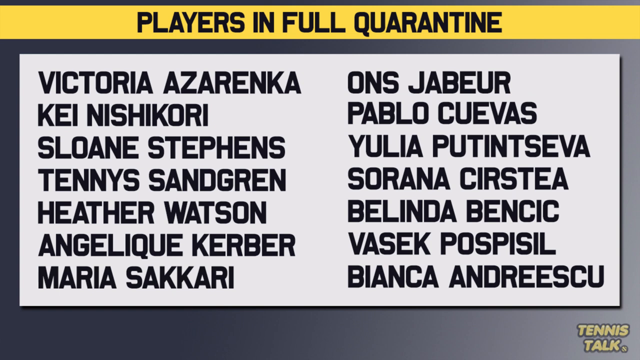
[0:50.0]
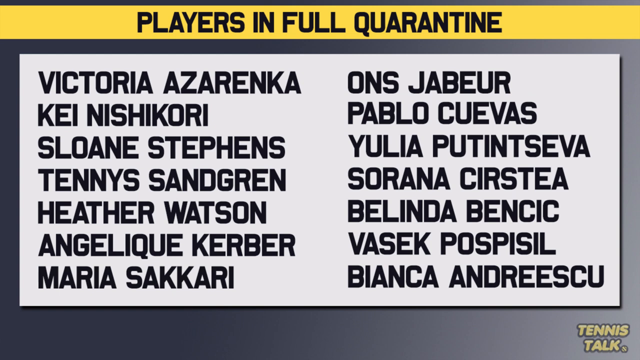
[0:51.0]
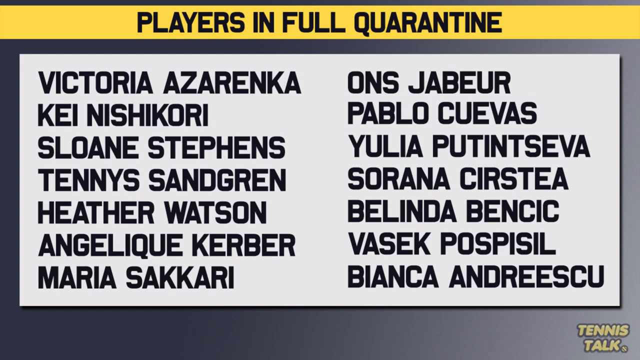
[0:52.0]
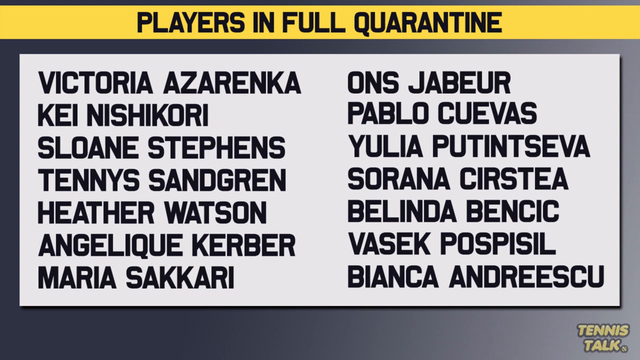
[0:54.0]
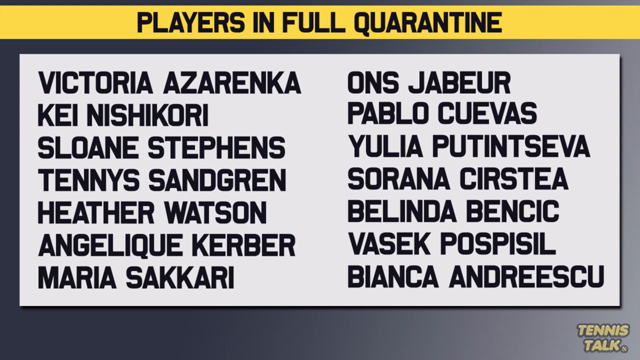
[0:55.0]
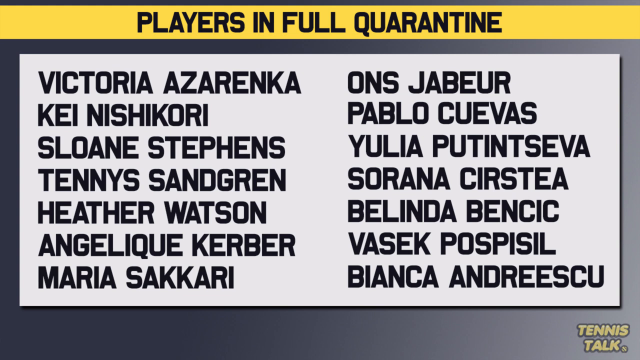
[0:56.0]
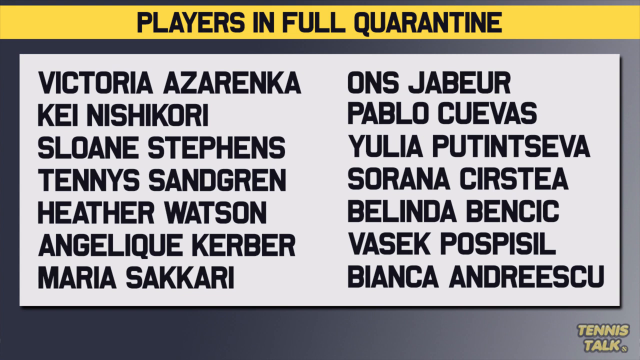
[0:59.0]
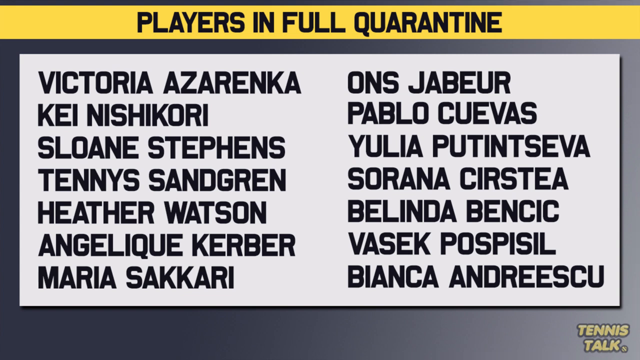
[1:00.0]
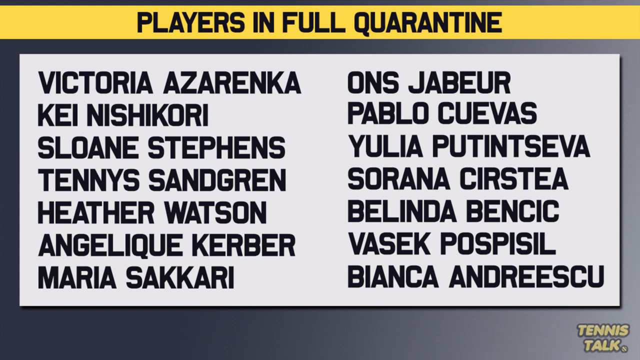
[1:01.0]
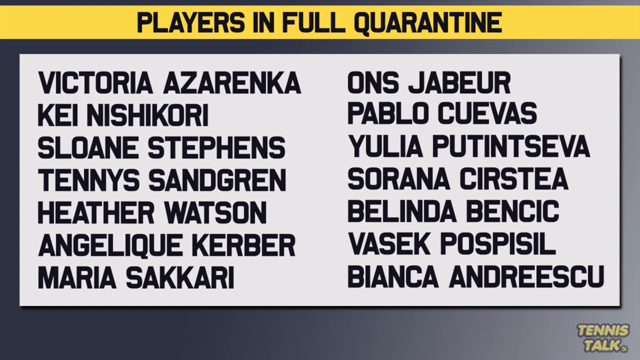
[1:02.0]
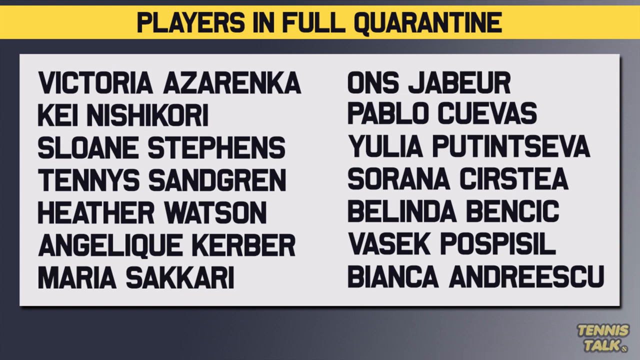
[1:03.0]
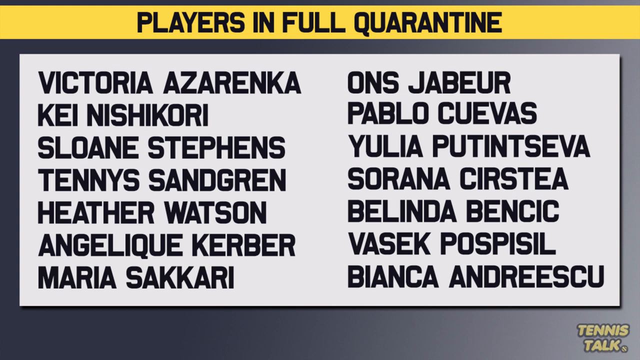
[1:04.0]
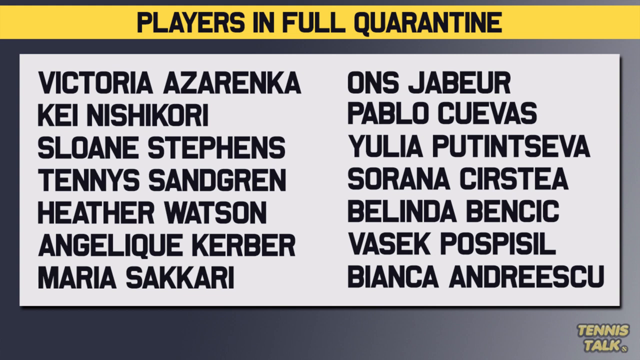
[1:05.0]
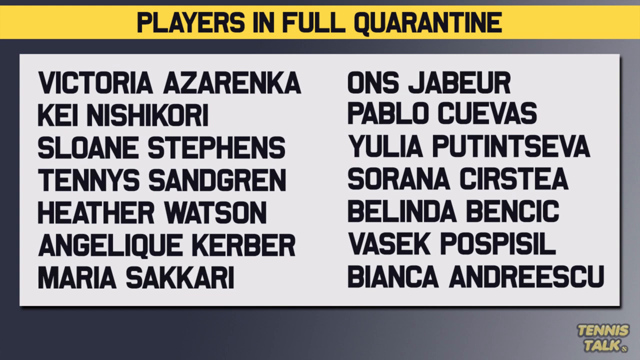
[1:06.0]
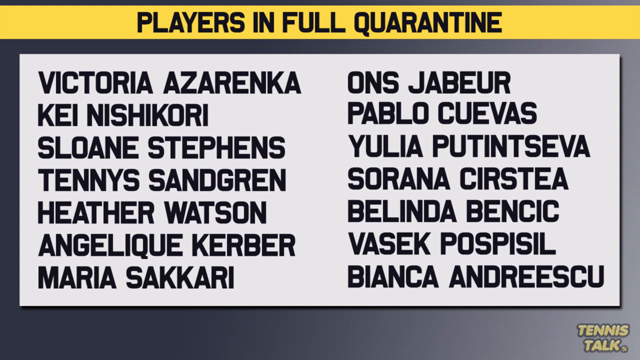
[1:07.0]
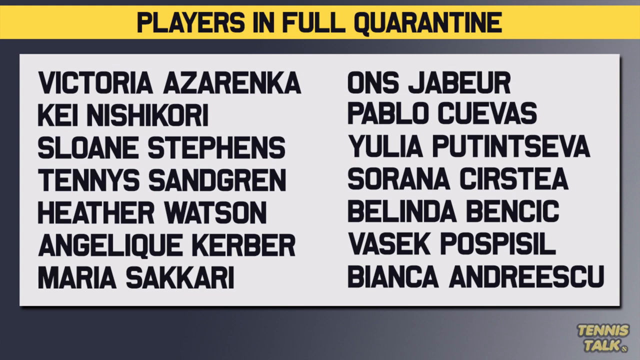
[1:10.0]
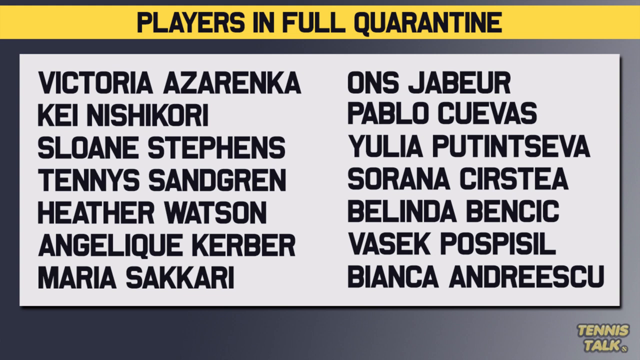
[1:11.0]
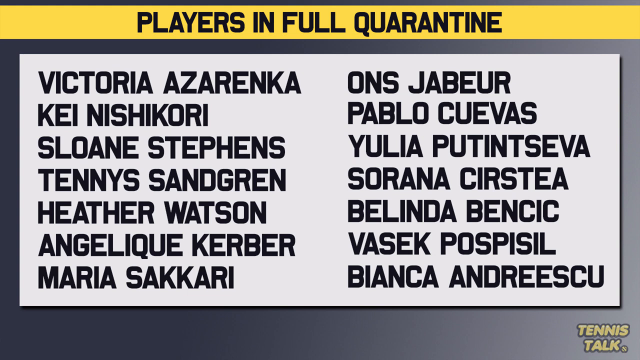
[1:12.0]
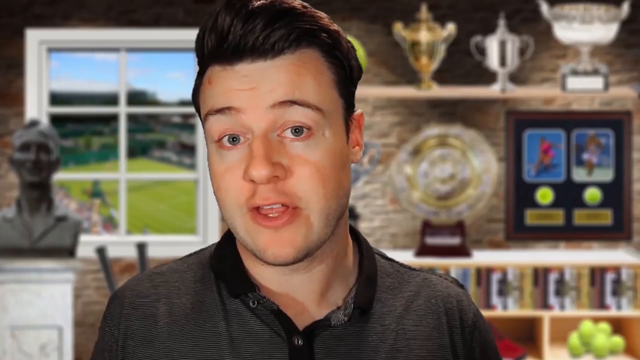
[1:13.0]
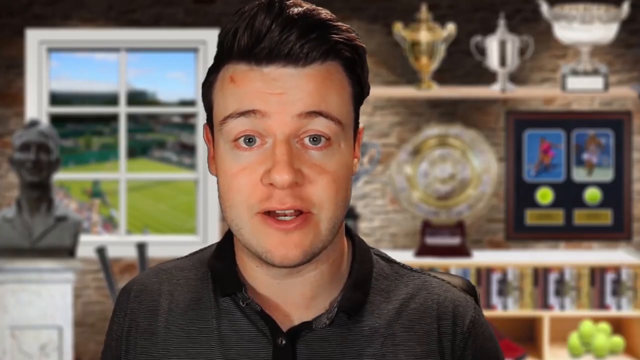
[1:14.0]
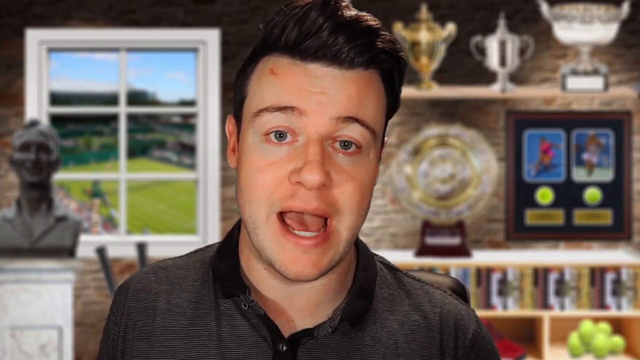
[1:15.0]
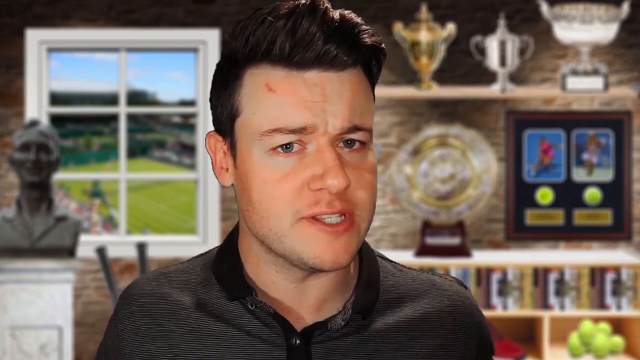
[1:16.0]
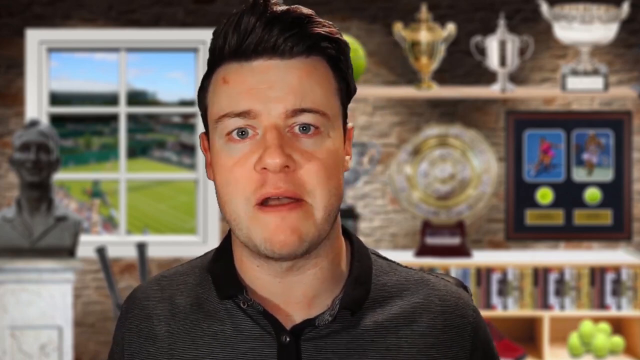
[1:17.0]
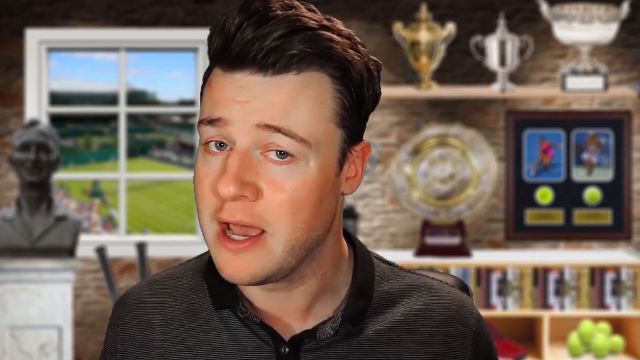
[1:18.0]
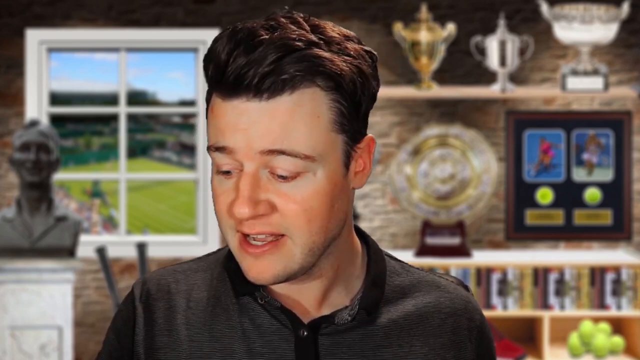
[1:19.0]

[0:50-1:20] At the top of the screen is an orange bar with a line of black text that says "Players in Full Quarantine". Directly beneath it, on what looks like a sheet of paper with a white background, are two columns of seven lines each, all black names. The left column lists Victoria Azarenka, Kei Nishikori, Sloane Stephens, Tennys Sandgren, Heather Watson, Angelique Kerber and Maria Sakkari. The right column lists Ons Jabeur, Pablo Cuevas, Yulia Putintseva, Sorana Cirstea, Belinda Bencic, Vasek Pospisil and Bianca Andreescu. This stays on the screen for quite a while before the image changes to a man in a stone-walled room, facing the camera as he speaks. Behind him, on his left, is a white-framed window with what looks like an artificial image of a meadow and mountains, and in front of it, a little to the side, is a bust of somebody. On the right are two shelves of trophies, with what look like sports memorabilia lined up underneath them. The man is white and wears dark clothing. He speaks very animatedly, moving his head around a lot, opening his mouth wide and shrugging his shoulder. He looks directly at the screen most of the time, except once, right before the shot ends, when he looks down and to the right for a few seconds.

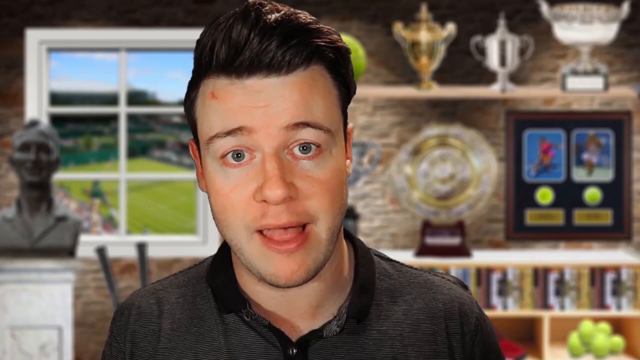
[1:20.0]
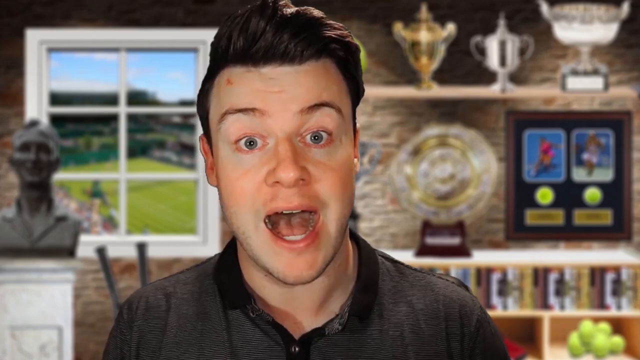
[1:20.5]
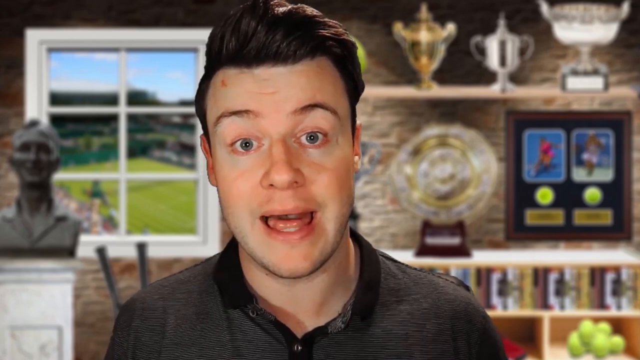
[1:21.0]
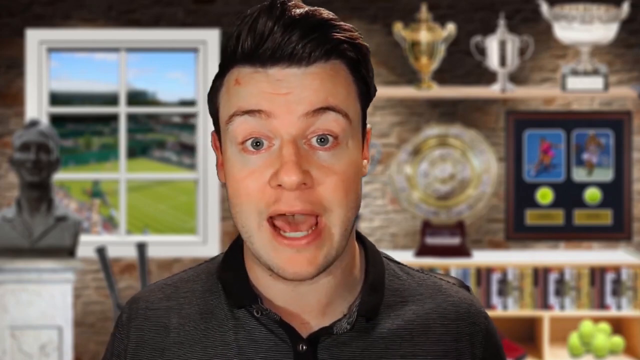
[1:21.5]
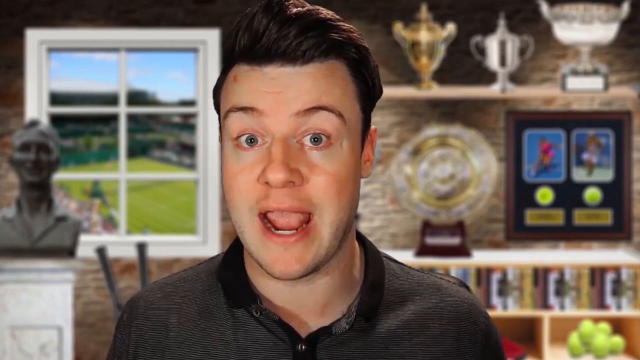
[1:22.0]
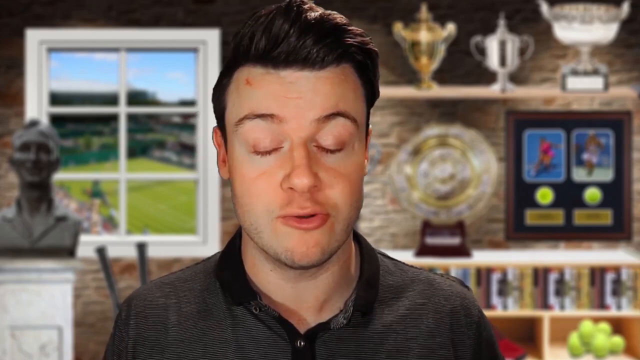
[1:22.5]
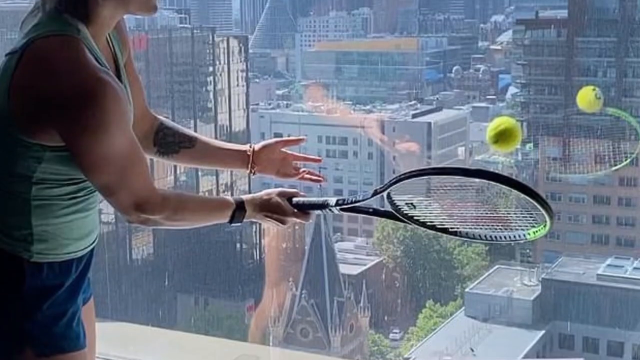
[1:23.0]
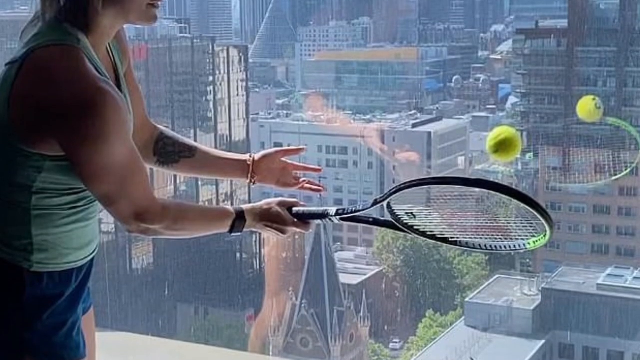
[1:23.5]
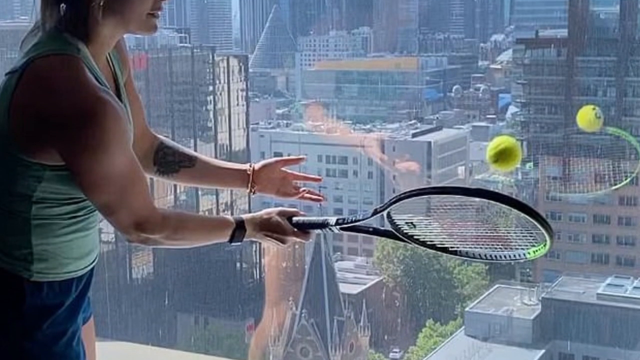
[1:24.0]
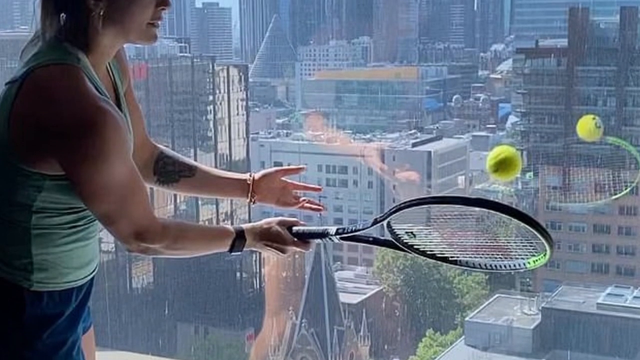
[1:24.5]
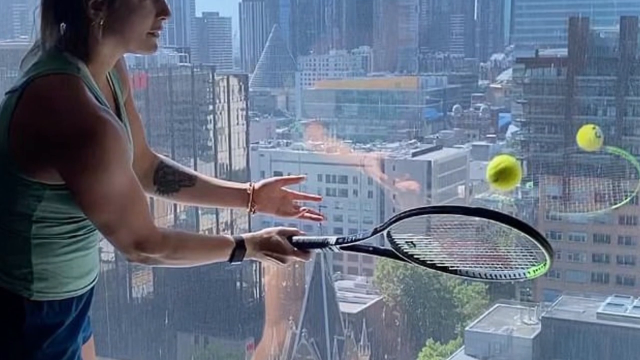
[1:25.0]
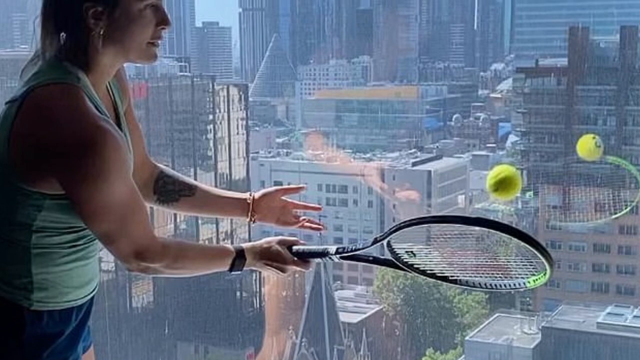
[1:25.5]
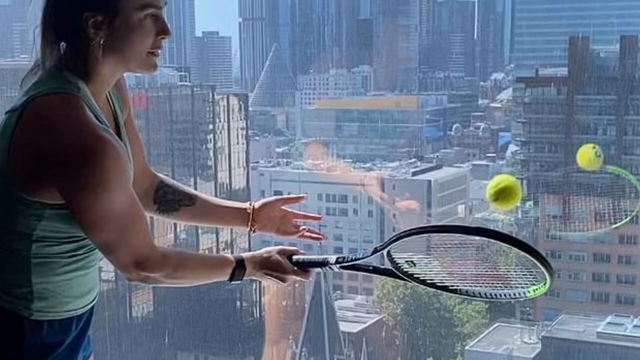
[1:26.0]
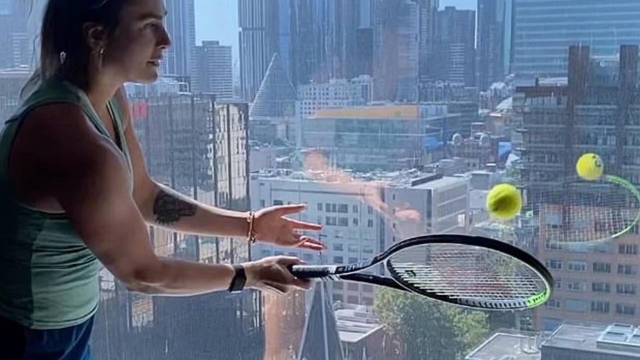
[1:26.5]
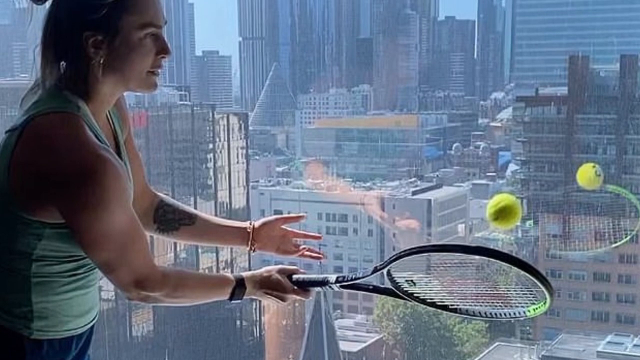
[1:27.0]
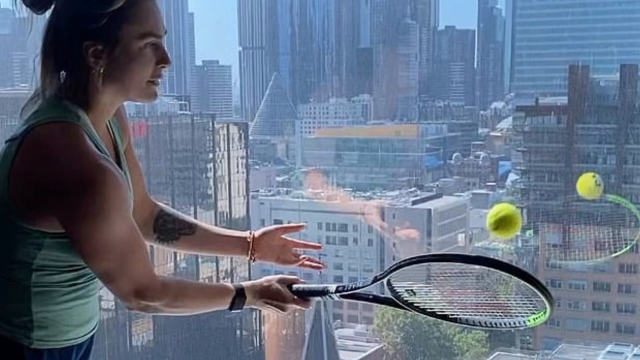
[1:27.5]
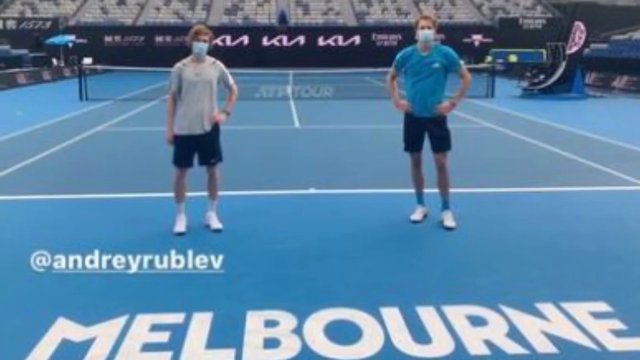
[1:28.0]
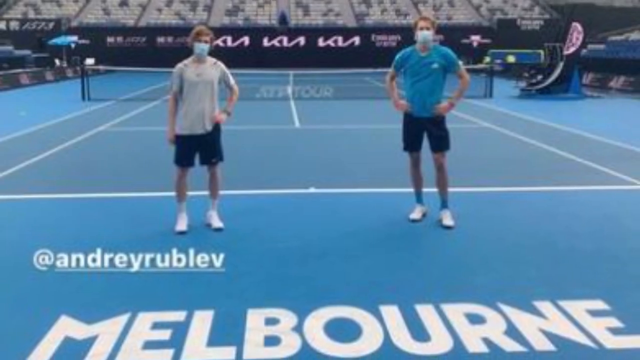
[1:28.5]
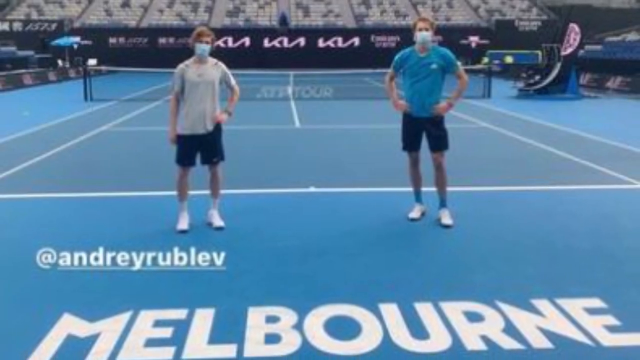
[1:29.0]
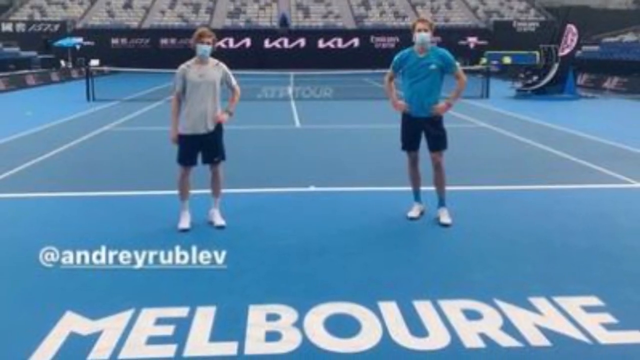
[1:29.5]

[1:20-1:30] A man stands in what looks like a stone-walled room. Behind him, on his left, is a white-framed window with a picture of a meadow and a mountain in it, and a little to the front of it is a bust of somebody. On the right behind him are two shelves of trophies, with what looks like sports memorabilia lined up underneath. The man is white, has a red mole on his right temple, and wears dark clothing. He looks directly at the screen as he speaks, raising his eyebrows a couple of times as if to emphasize a point, and is very animated, moving his head to the side and back and forth quite a few times. The scene changes to a still shot of a woman in a sleeveless shirt with a tattoo on the inner side of her left forearm. She holds a tennis racket in her right hand, and a tennis ball looks like it has just bounced off the racket. She appears to be standing in front of a window, outside which a whole city is visible, and a reflection of the racket and ball can be seen in the window. The image starts lower and shifts upwards for a couple of seconds before the scene changes to two people standing on a blue tennis court with white lines, both wearing medical face masks. The person on the left wears a gray shirt, dark pants and white sneakers; the person on the right wears a dark aqua blue shirt, dark pants and white sneakers as well. In the bottom left corner, white text says "At Andrey Rublev". The image zooms a little away from the two people.